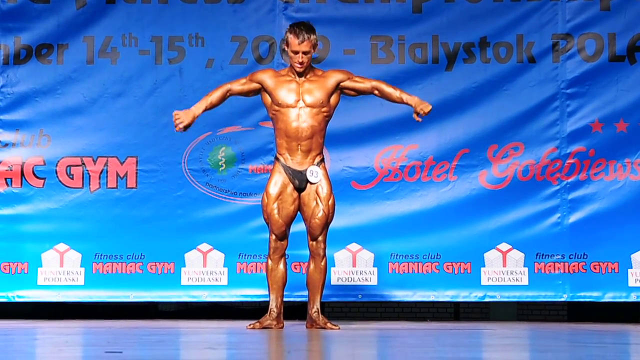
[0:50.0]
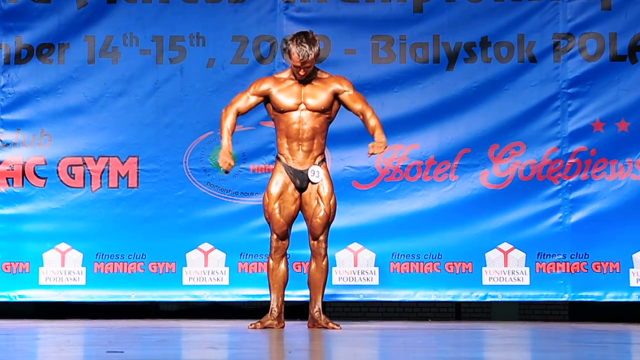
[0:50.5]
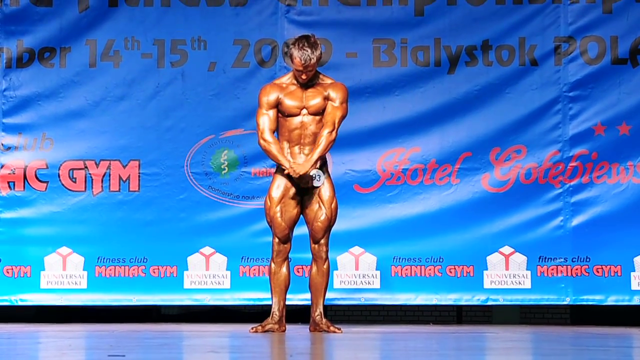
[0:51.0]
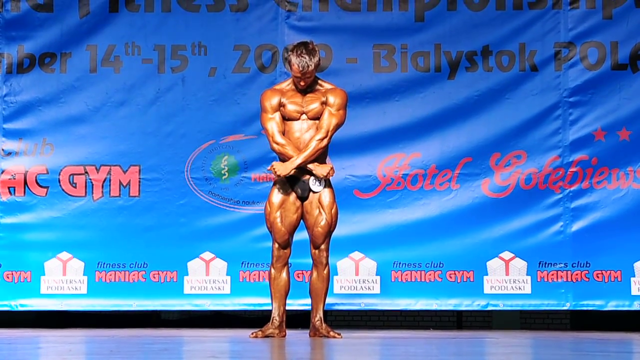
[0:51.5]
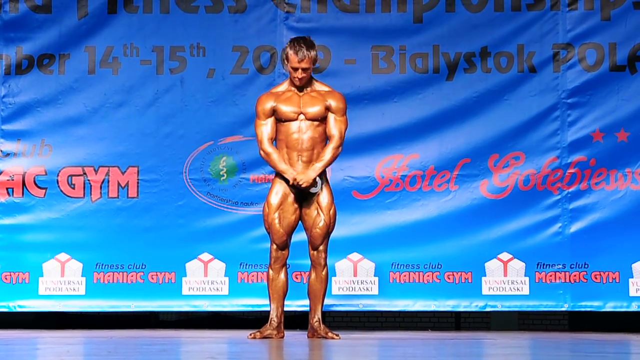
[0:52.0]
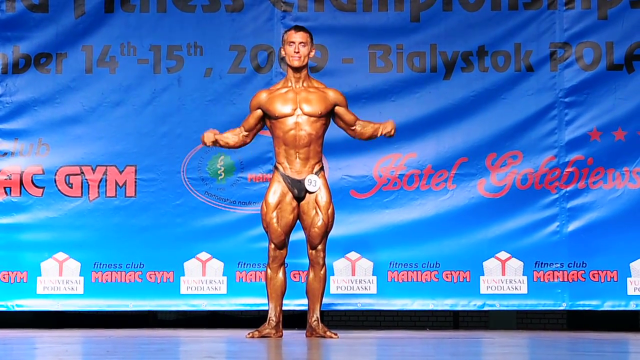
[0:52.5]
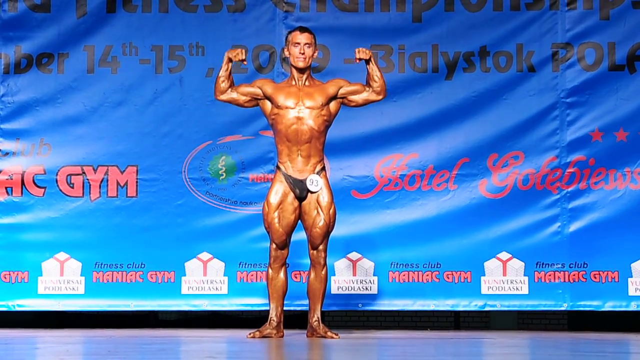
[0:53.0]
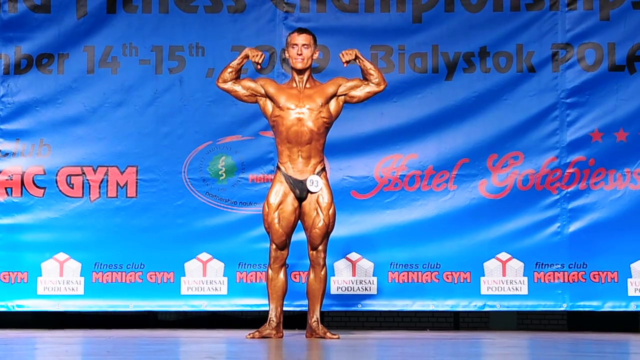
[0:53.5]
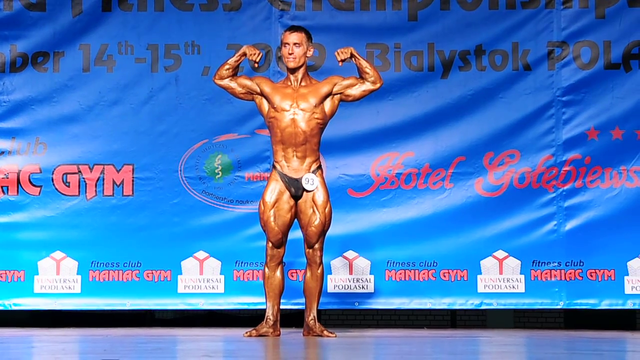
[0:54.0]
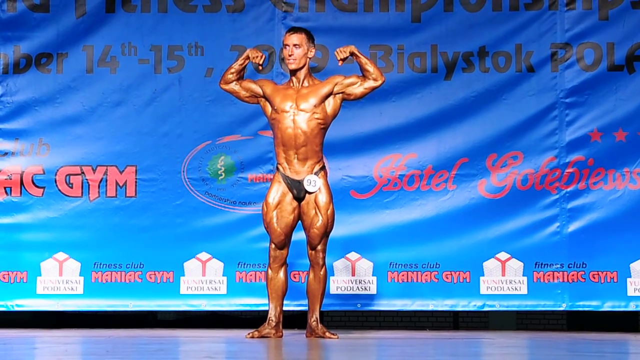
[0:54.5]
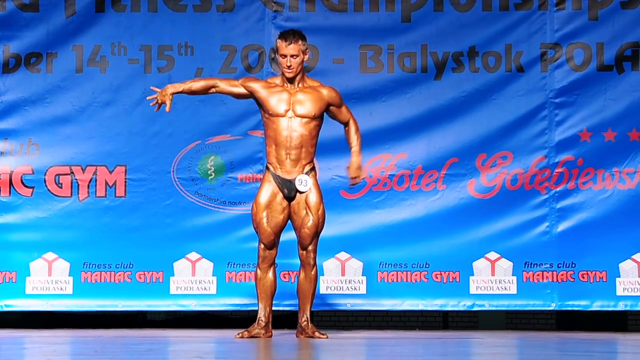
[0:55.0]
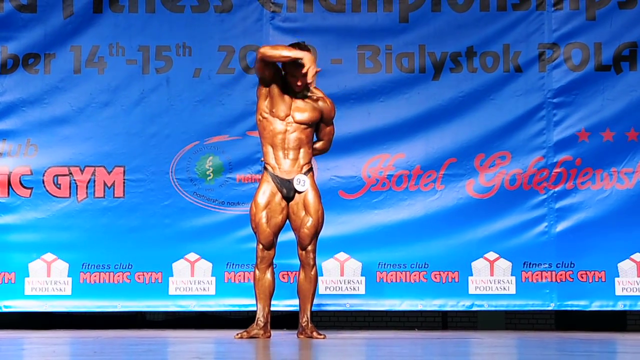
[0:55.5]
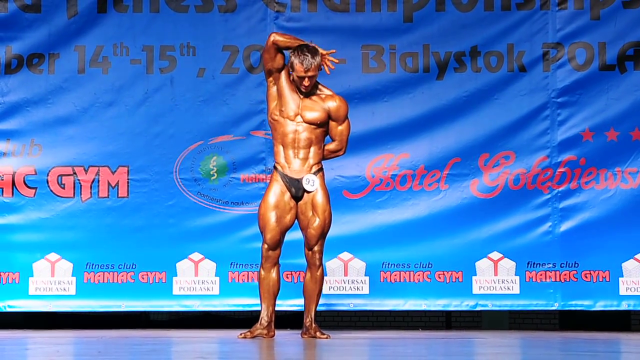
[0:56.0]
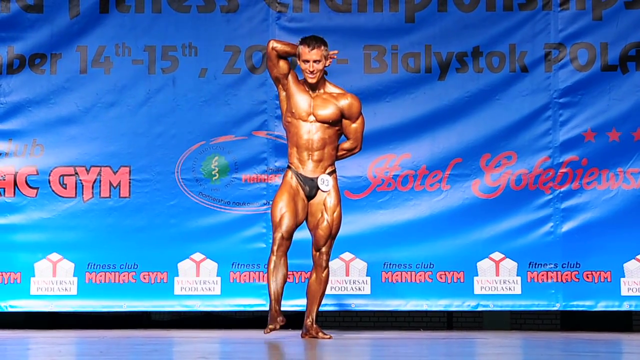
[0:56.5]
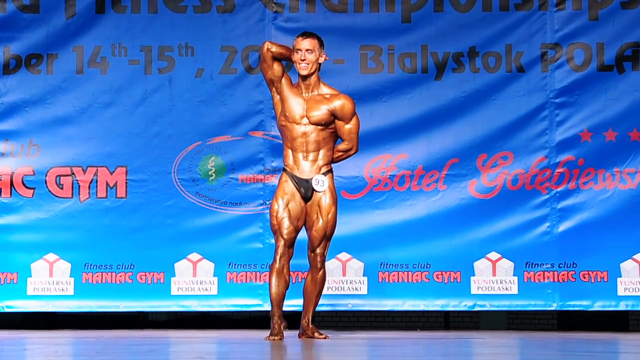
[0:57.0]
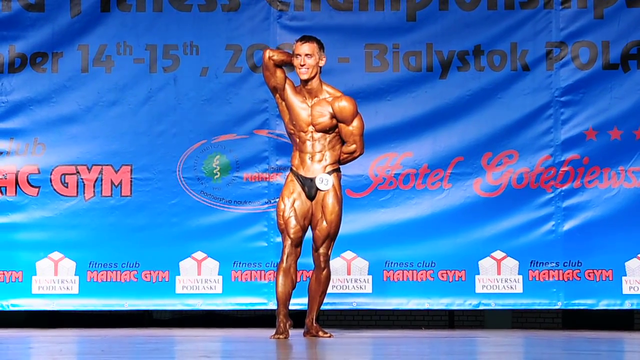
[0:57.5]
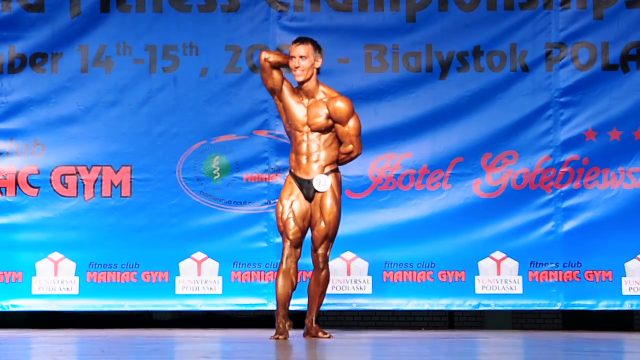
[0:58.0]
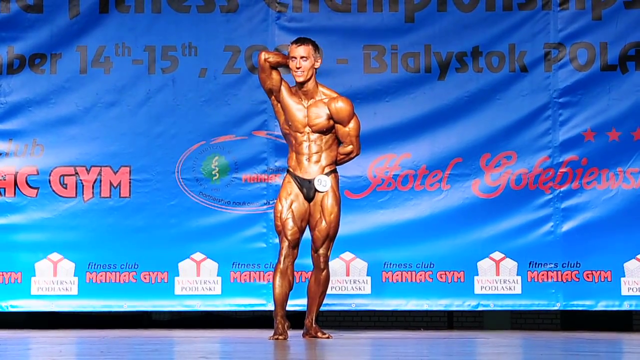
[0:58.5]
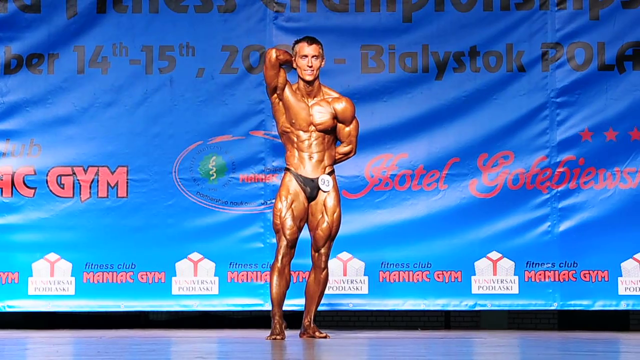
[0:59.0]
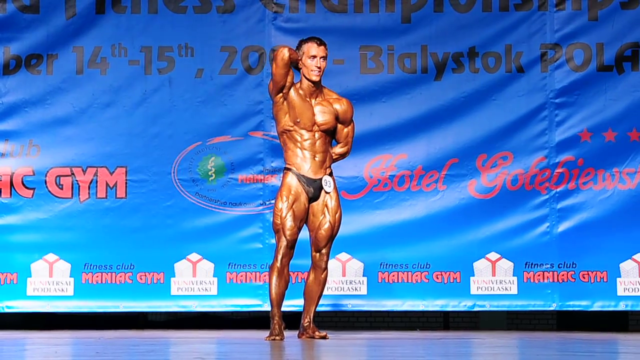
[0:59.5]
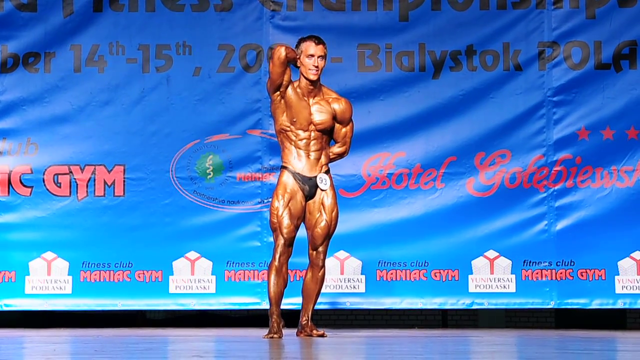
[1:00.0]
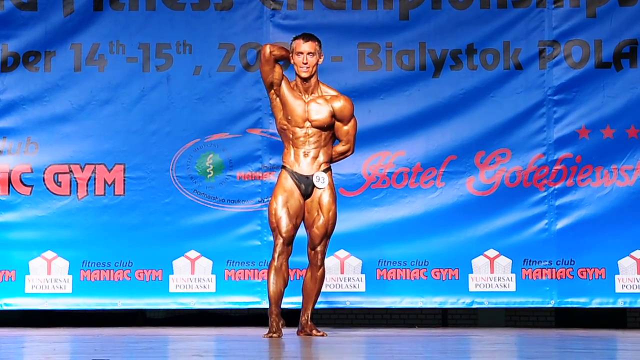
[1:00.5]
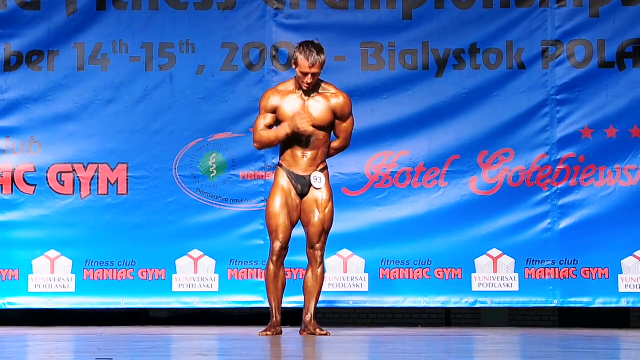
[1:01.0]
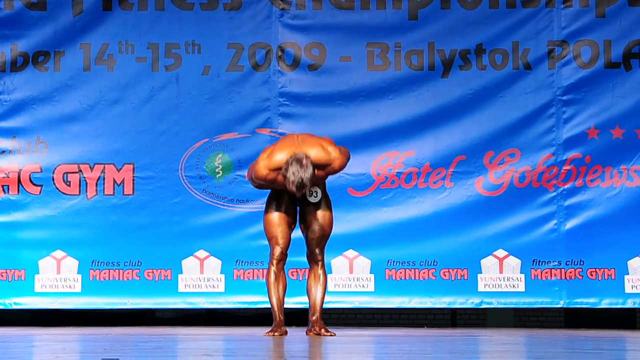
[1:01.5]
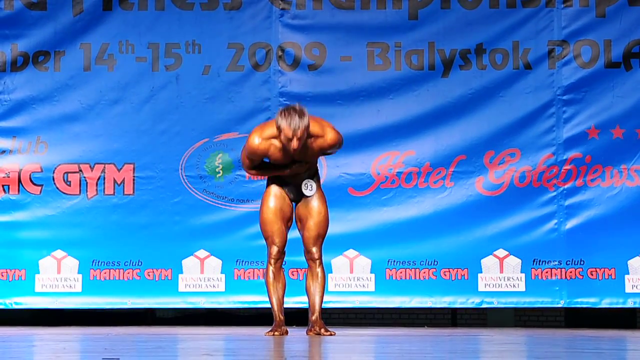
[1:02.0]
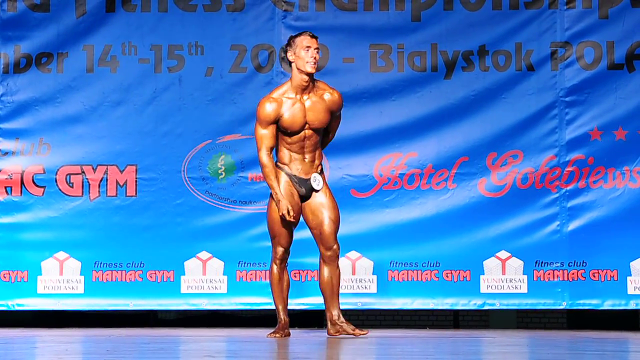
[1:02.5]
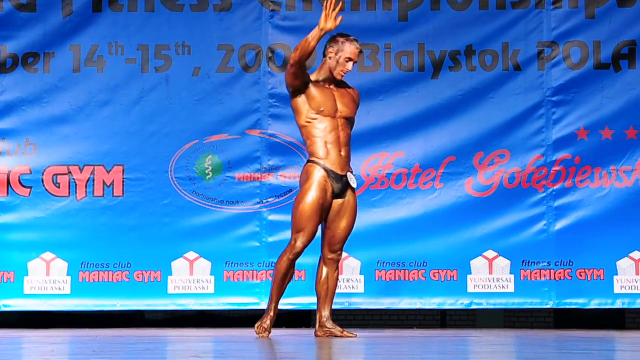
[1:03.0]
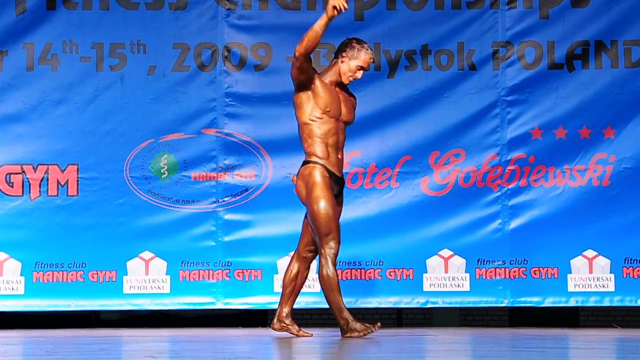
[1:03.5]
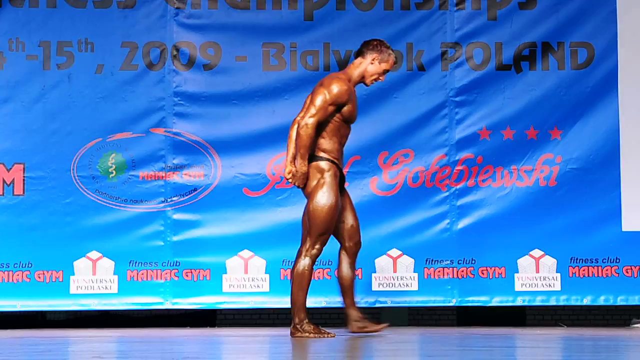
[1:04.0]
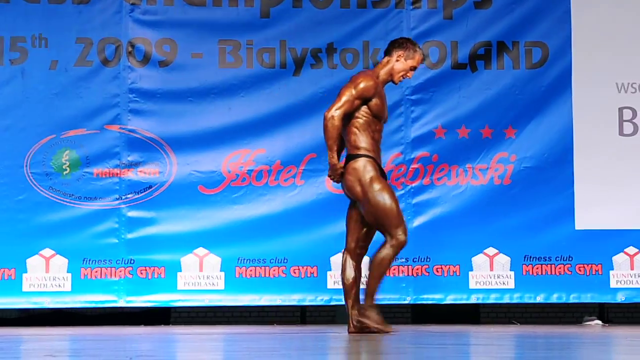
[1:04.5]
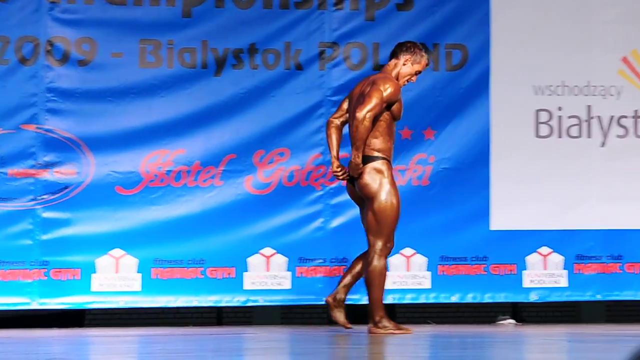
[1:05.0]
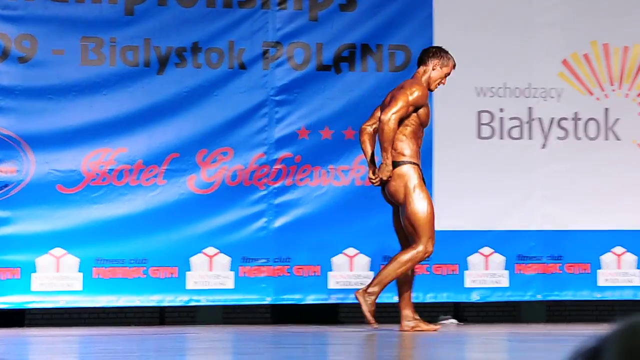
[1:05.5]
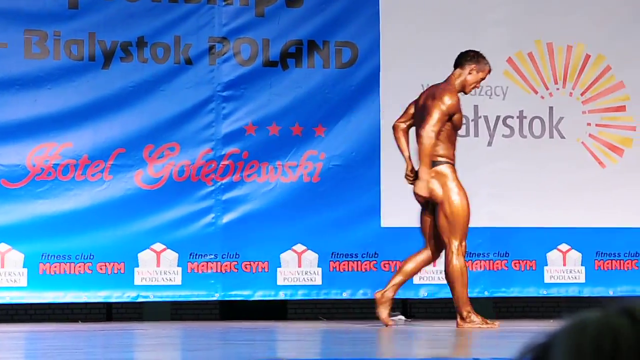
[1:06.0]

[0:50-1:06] The bodybuilder stands on stage flexing his muscles toward judges who are not shown. Facing the front, he lifts his right arm over his head and flexes, showing the definition in his chest, torso and arms in a front view of his muscular body. As he finishes his routine, he waves to the judges and to the crowd, which is possibly applauding him, and walks off the stage.